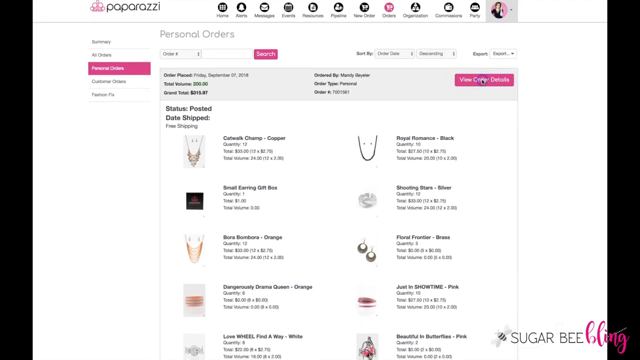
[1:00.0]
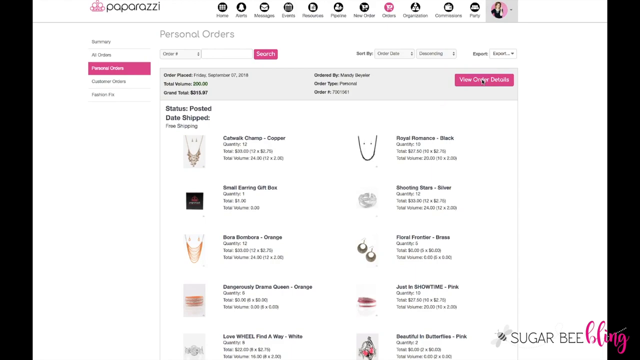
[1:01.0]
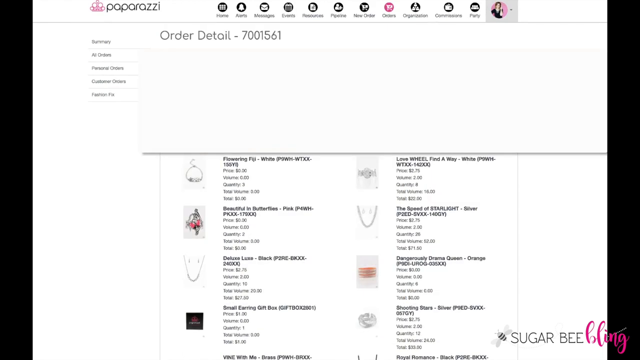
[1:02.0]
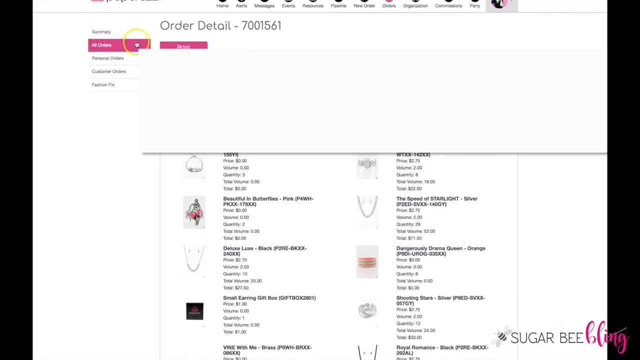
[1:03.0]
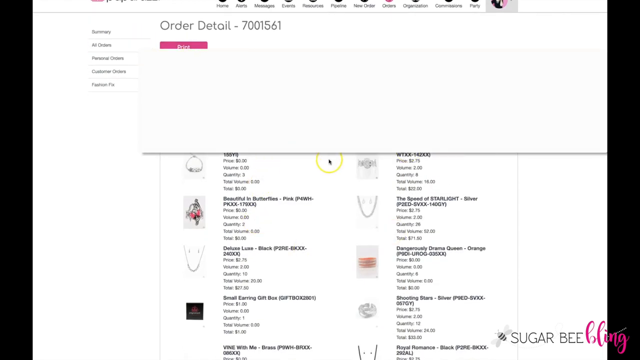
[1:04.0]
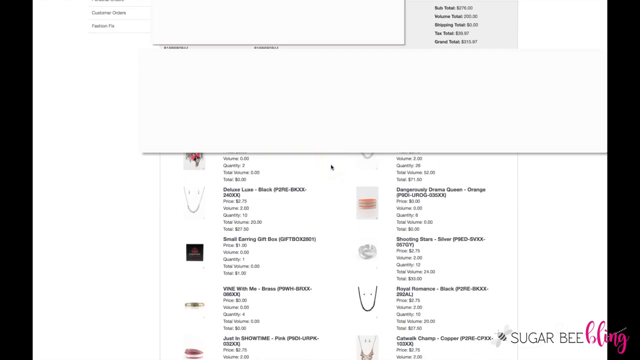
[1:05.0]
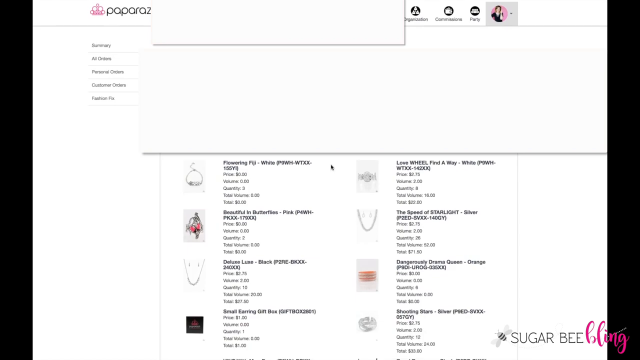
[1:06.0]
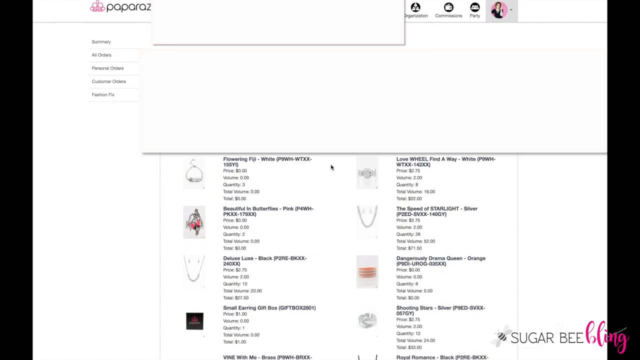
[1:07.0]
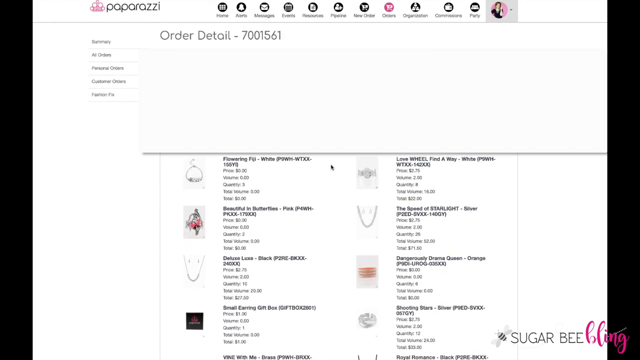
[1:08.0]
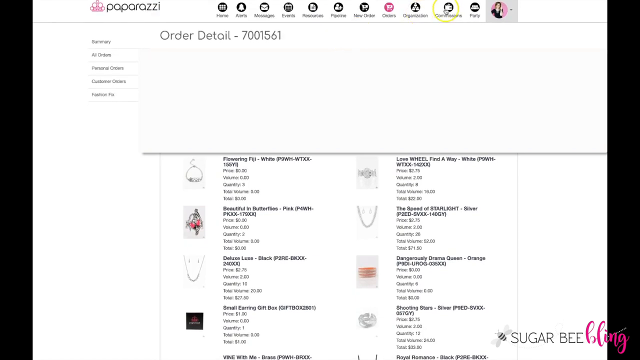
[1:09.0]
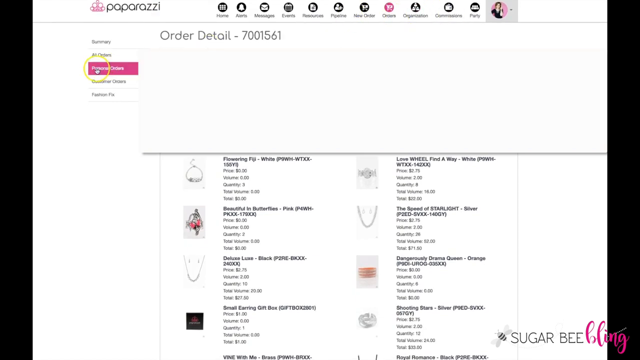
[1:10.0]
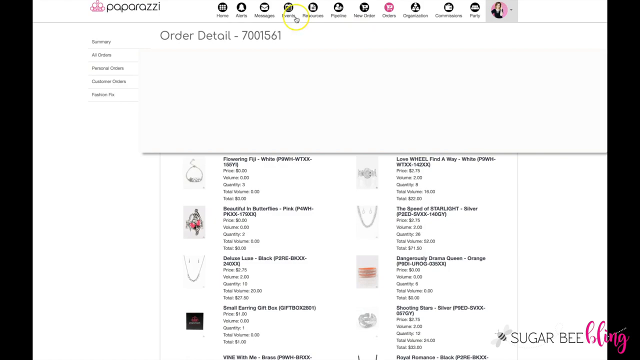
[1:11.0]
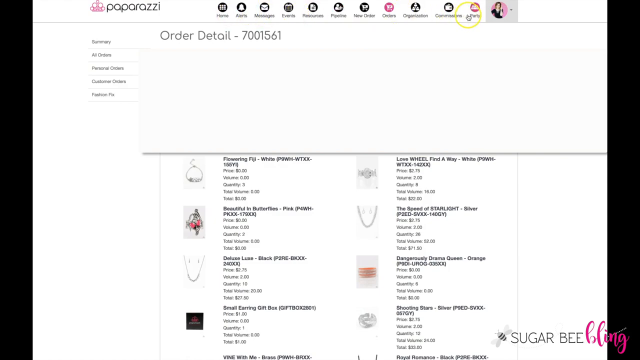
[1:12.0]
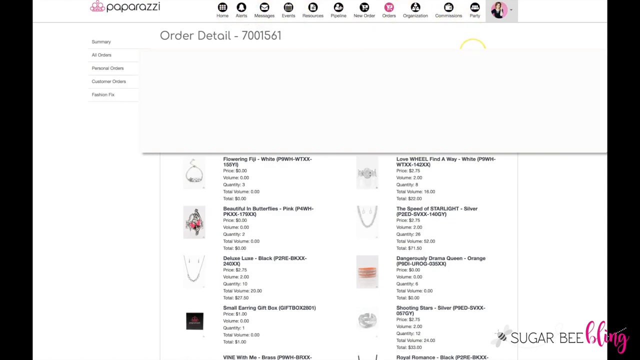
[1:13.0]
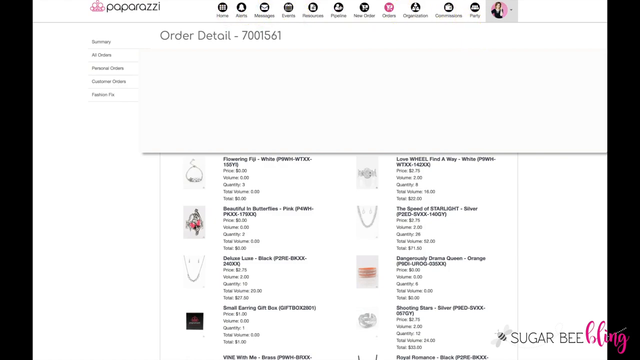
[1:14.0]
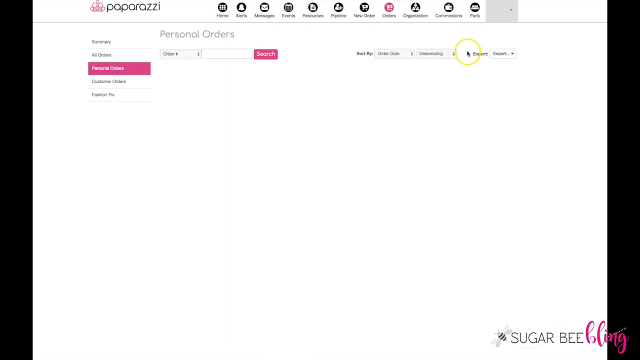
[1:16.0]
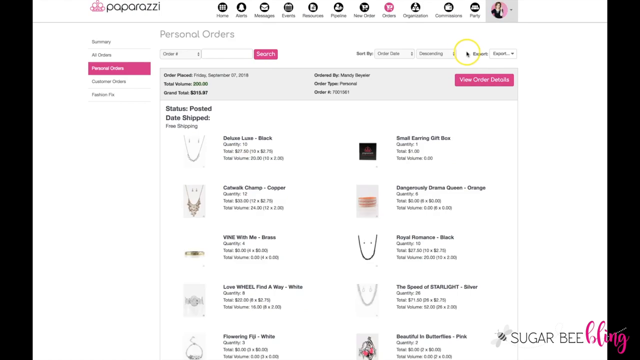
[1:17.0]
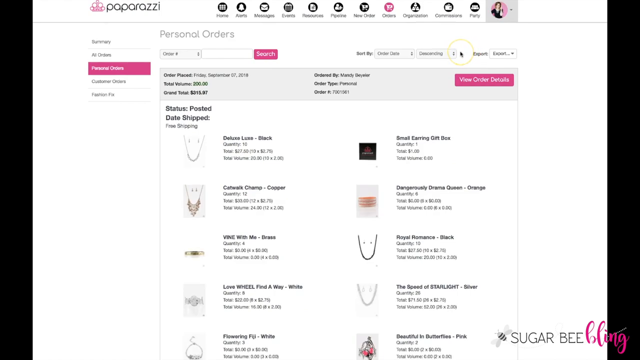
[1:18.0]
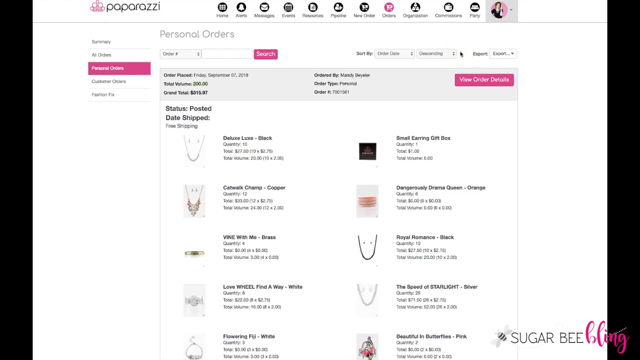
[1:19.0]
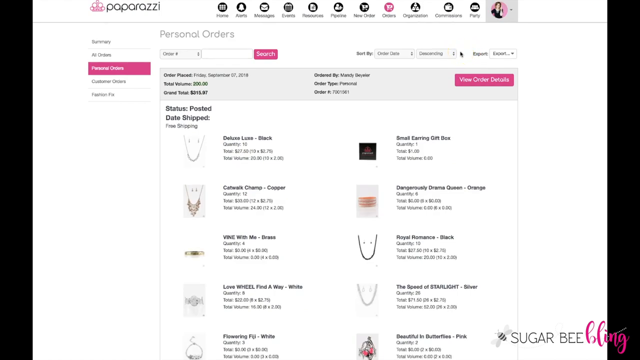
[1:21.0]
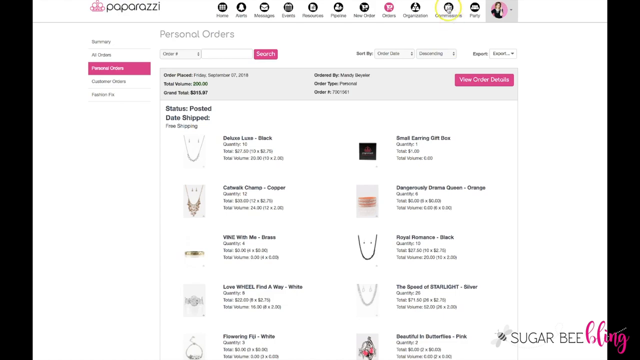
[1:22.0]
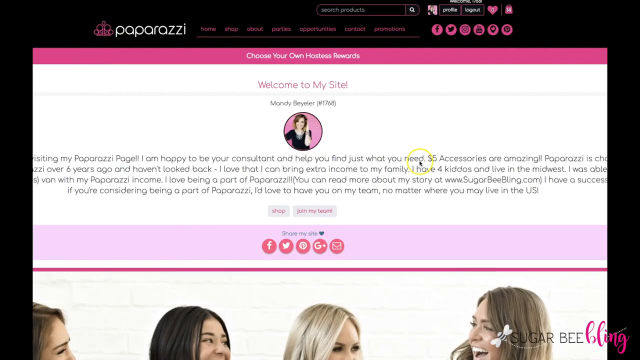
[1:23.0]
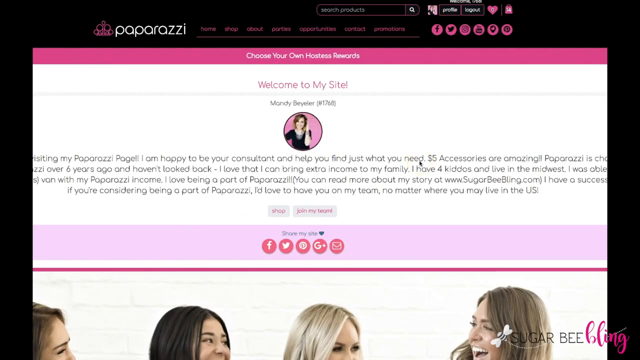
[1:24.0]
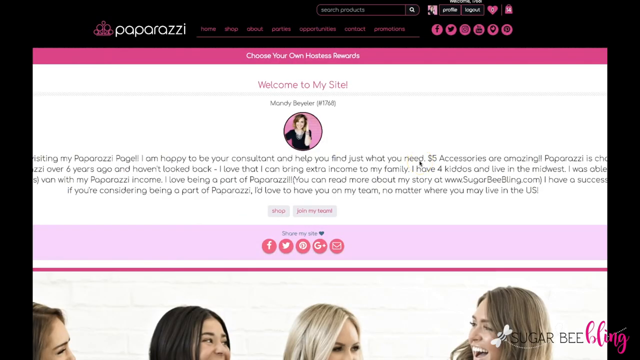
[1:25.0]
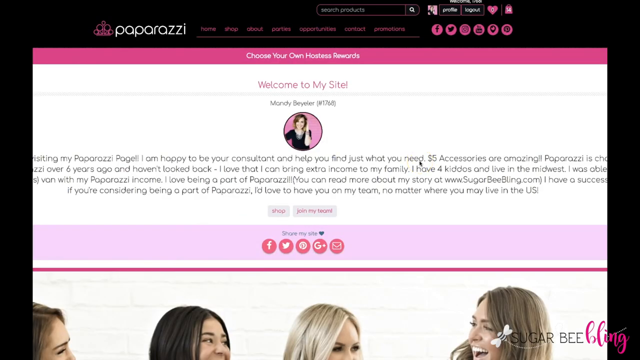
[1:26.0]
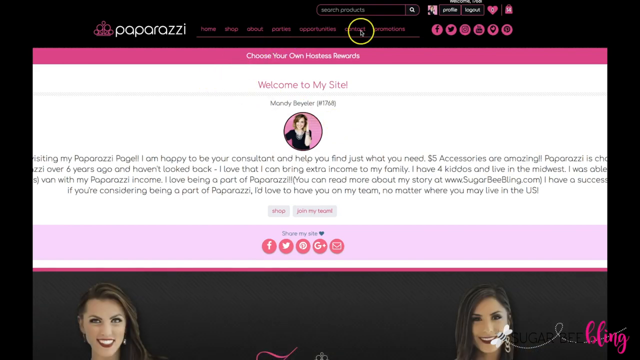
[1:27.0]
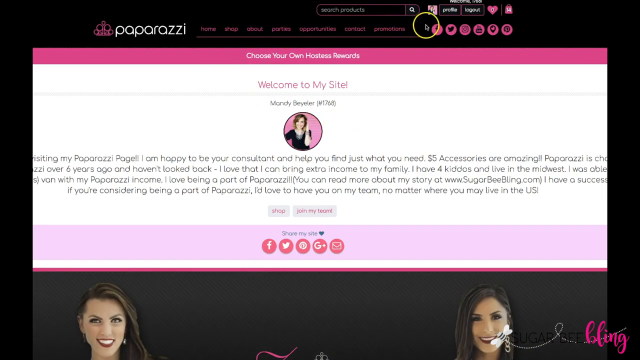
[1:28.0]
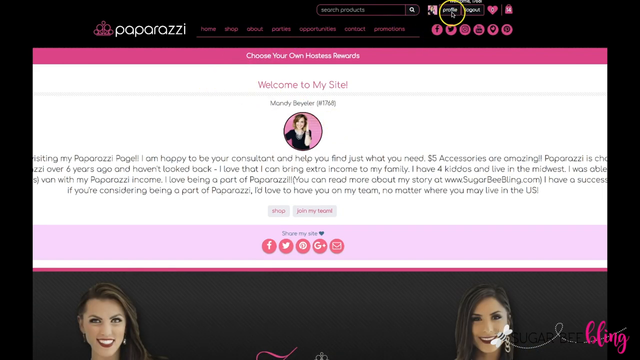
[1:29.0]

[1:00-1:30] The Paparazzi website shows jewelry available to order, and a mouse cursor moves through the site. Two blank spaces apparently hide information about the client and the order. The view returns to the personal orders page and then goes to the main page of the Paparazzi website, which has text reading "Welcome to my site" and "I'm happy to be a consultant and help you find just what you need. Five dollar accessories are amazing," along with other positive sentences about the Paparazzi website. The mouse then clicks on the account's profile.